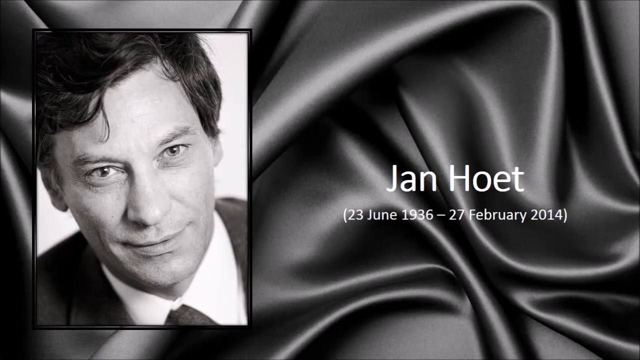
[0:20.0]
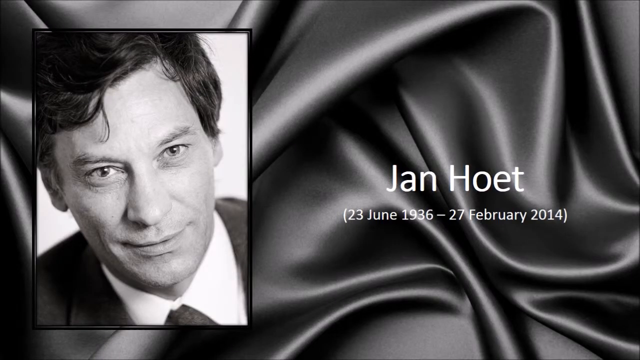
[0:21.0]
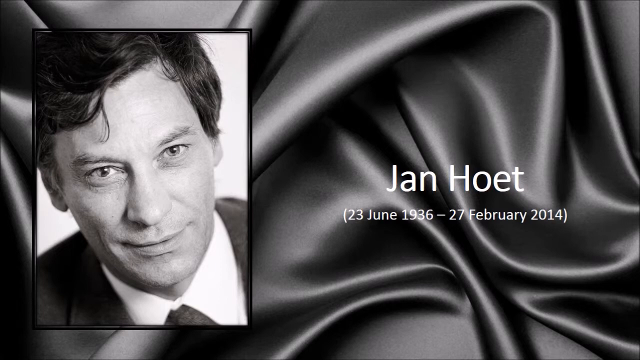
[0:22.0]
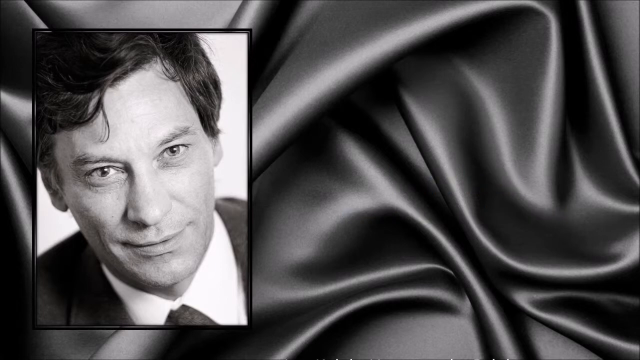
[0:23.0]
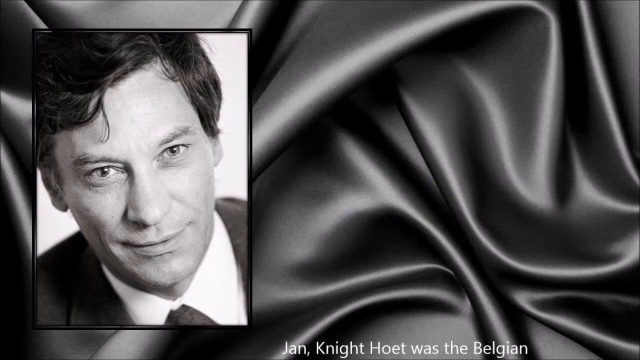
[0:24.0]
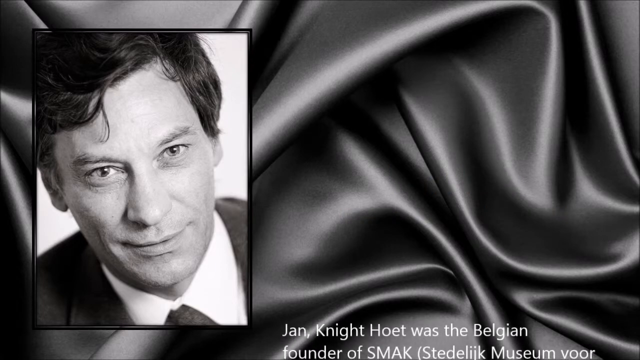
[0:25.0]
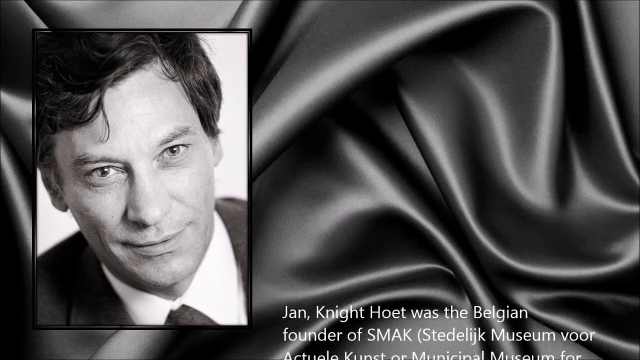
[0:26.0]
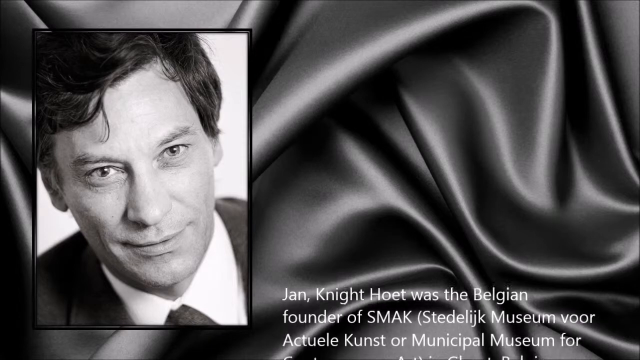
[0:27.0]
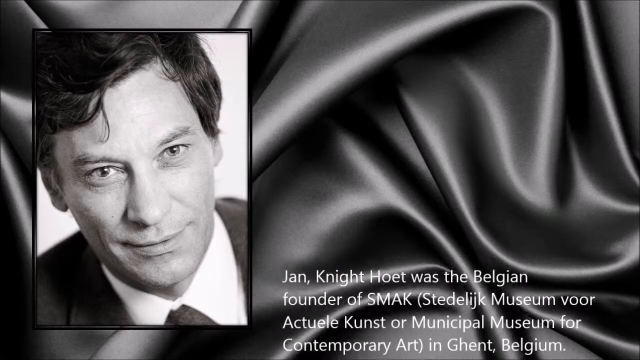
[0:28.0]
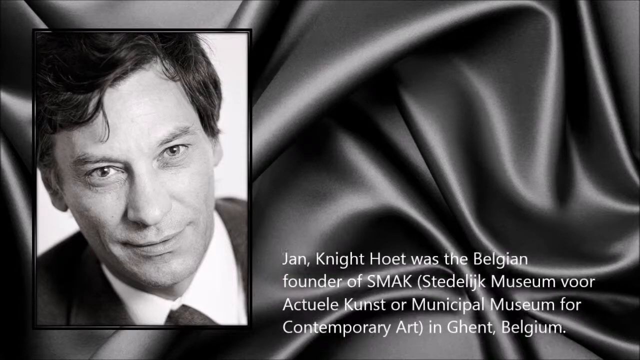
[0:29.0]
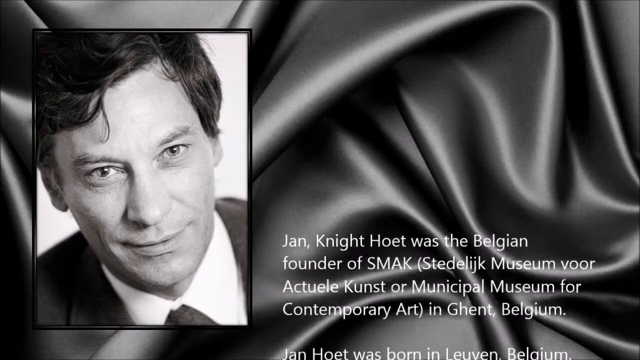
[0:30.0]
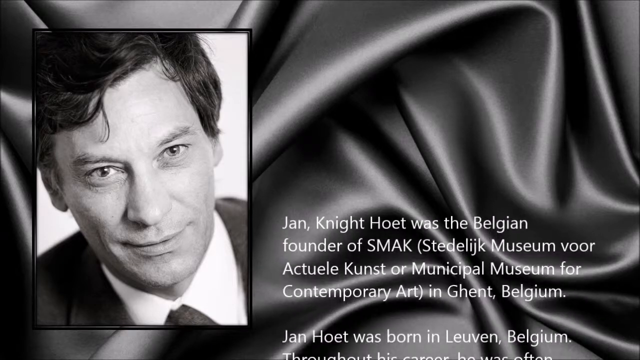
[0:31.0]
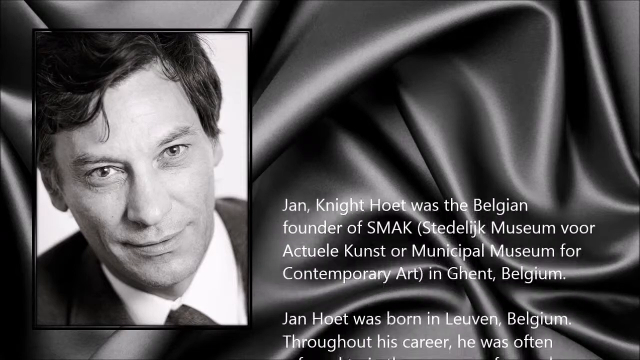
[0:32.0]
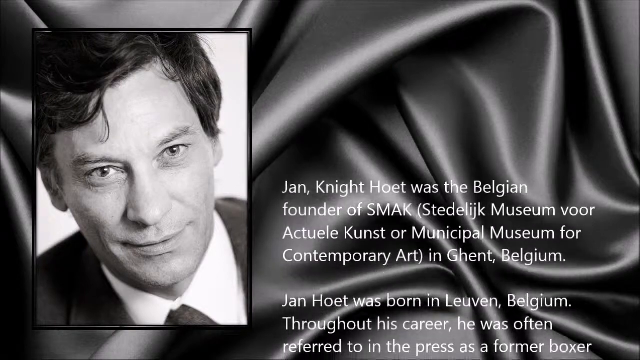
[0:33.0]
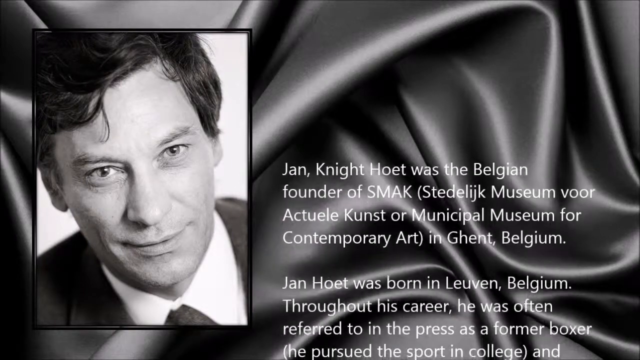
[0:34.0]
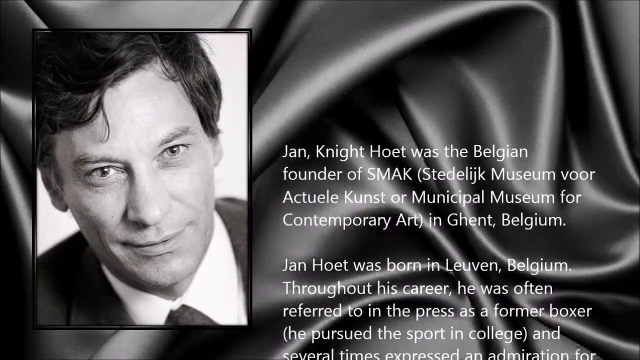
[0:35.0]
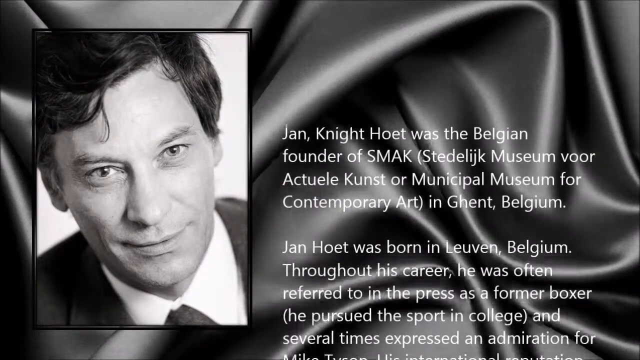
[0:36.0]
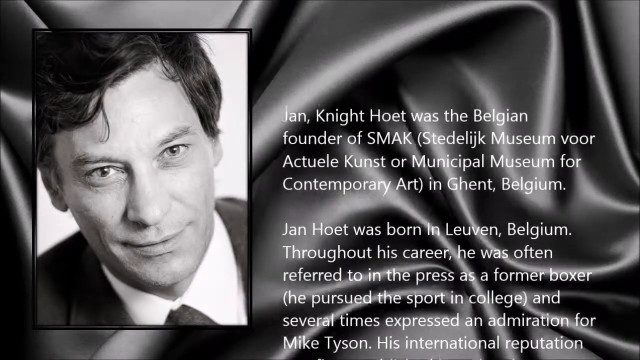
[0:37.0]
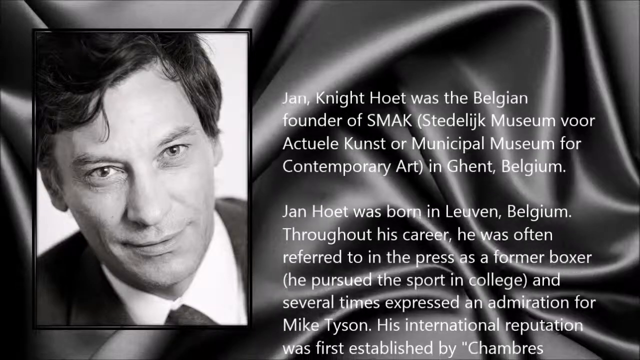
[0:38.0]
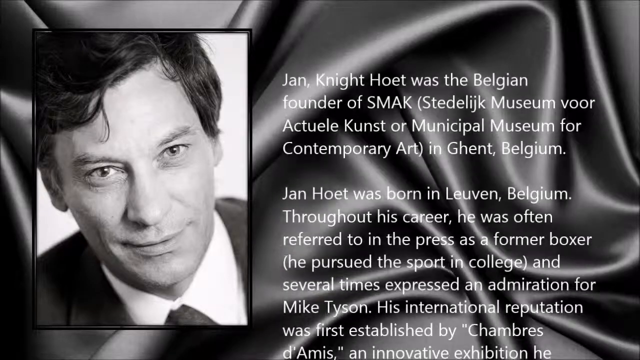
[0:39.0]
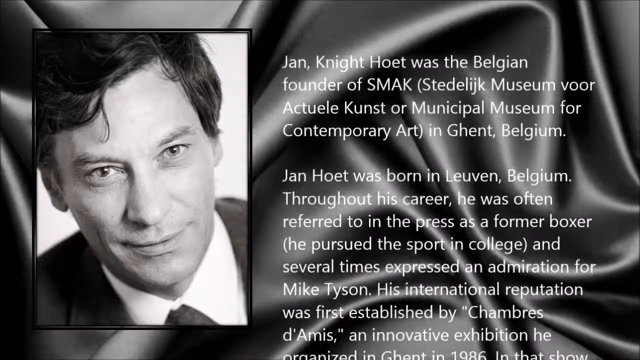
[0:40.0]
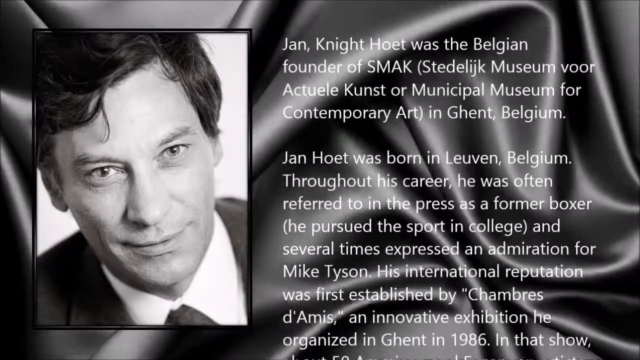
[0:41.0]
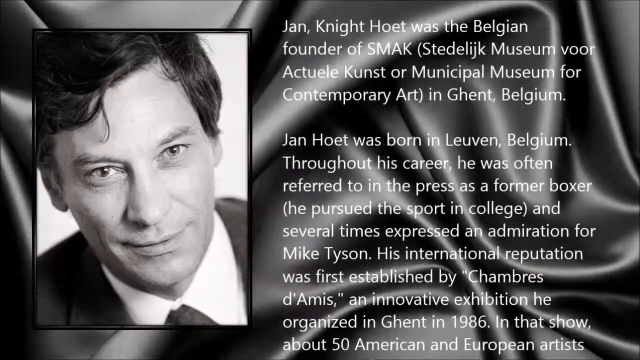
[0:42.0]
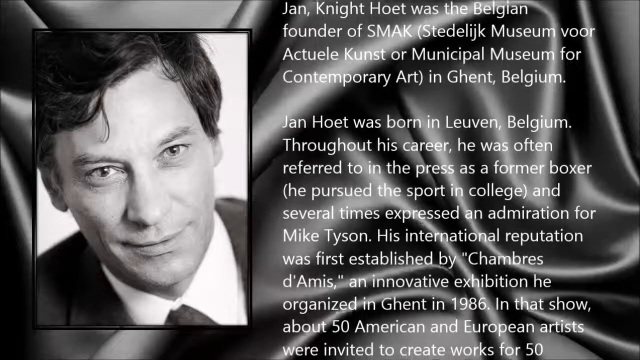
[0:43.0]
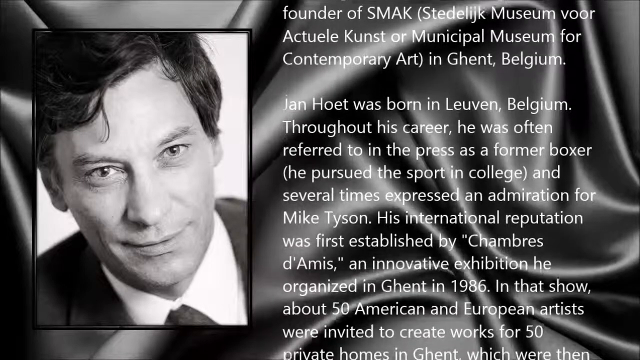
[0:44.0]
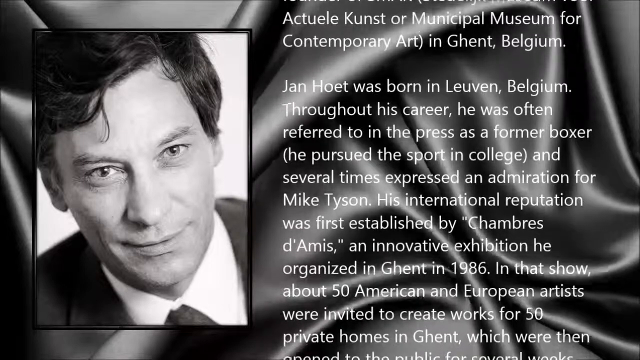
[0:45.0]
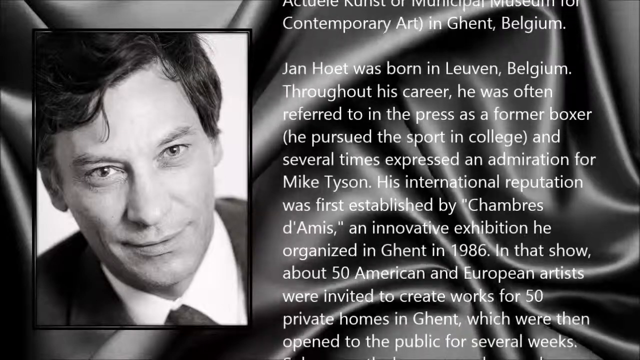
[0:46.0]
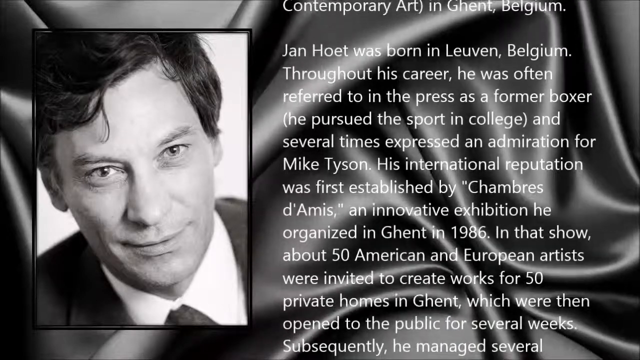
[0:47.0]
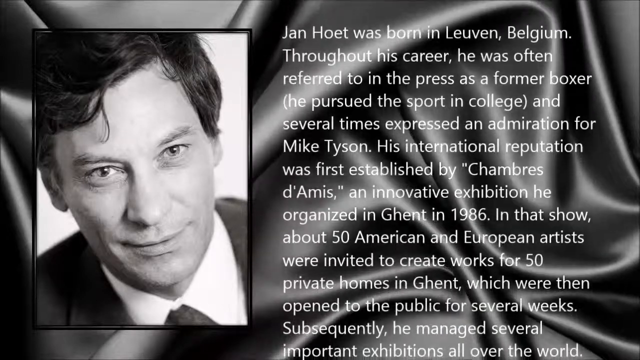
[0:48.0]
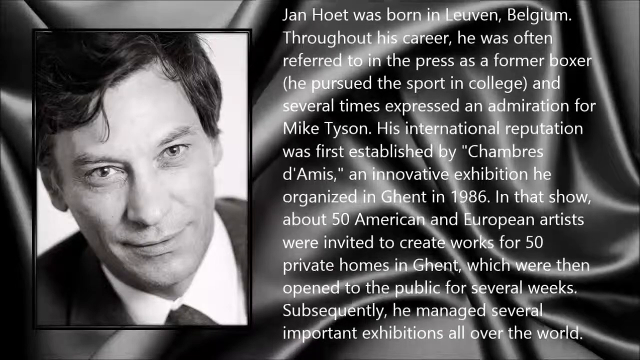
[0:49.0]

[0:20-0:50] To the right of the man's picture, text slowly moves onto the screen from the bottom and scrolls toward the top. It reads: "Jan Hoet was the Belgian founder of SMOK", followed in brackets by "Stedelijk Museum voor Actuele Kunst". It continues: "Jan Hoet was born in Leuven, Belgium. Throughout his career he was often referred to in the press as a former boxer. He pursued the sporting college and several times expressed an admiration for Mike Tyson." The text goes on to say that his international reputation was first established by an innovative exhibition he organized in Gent in 1986: "In that show about 15 American and European artists were invited to create works for 50 private homes in Gent which were then open to the public for several weeks. Subsequently he managed several important exhibitions all over the world."